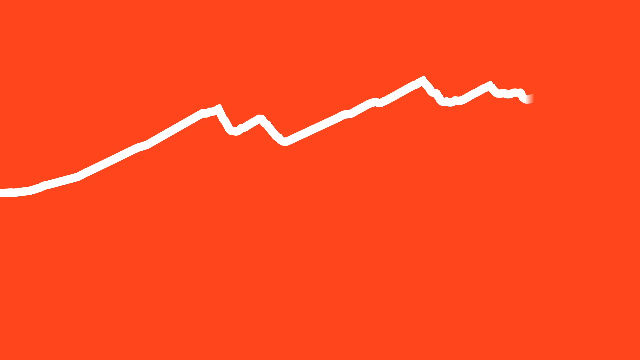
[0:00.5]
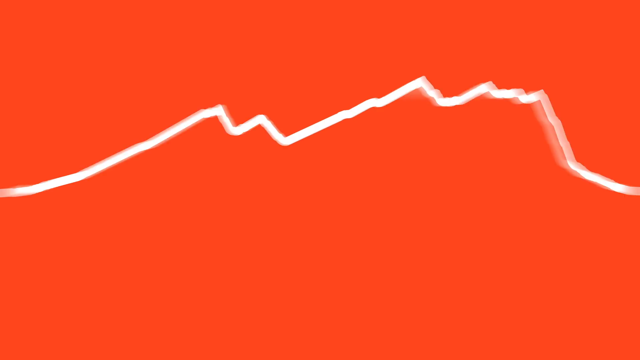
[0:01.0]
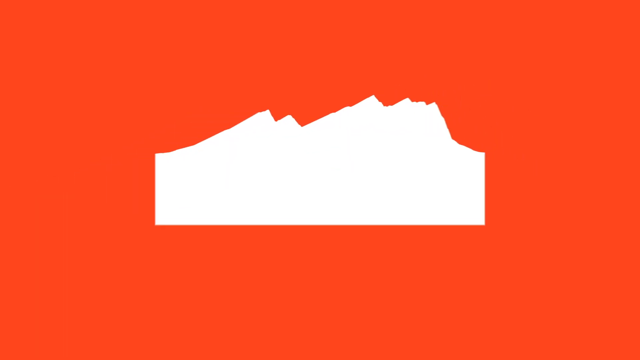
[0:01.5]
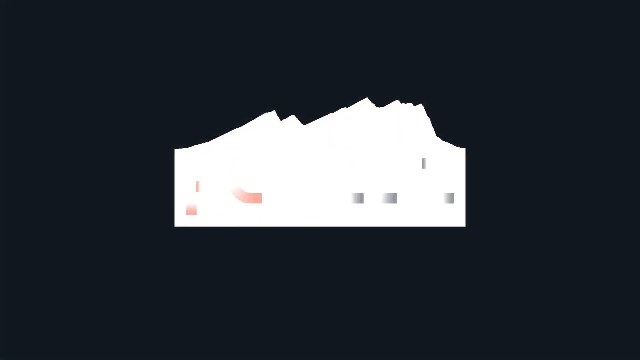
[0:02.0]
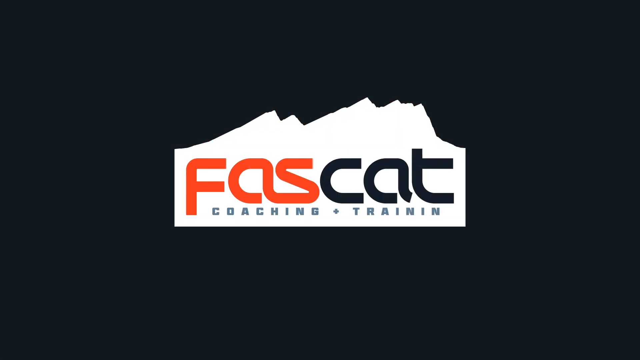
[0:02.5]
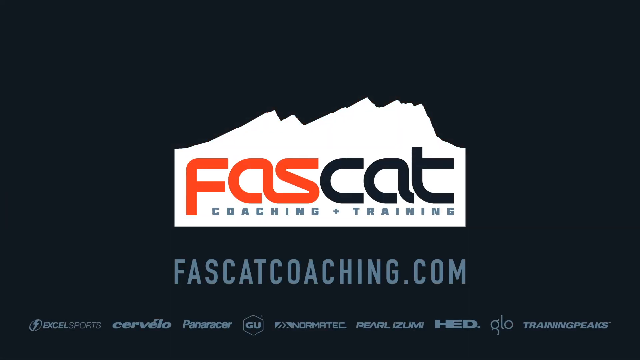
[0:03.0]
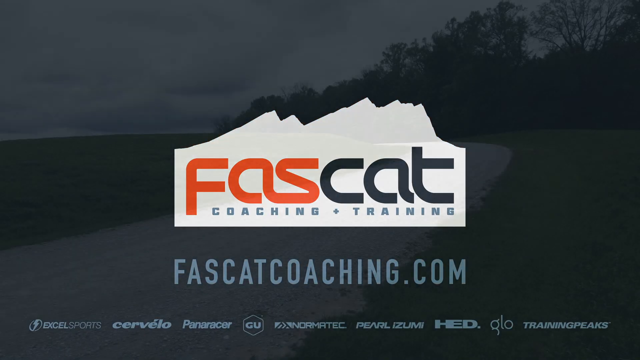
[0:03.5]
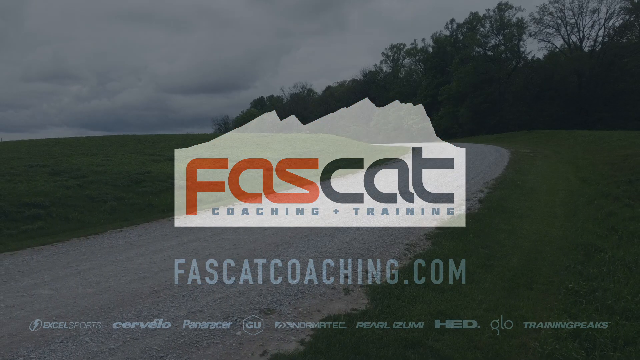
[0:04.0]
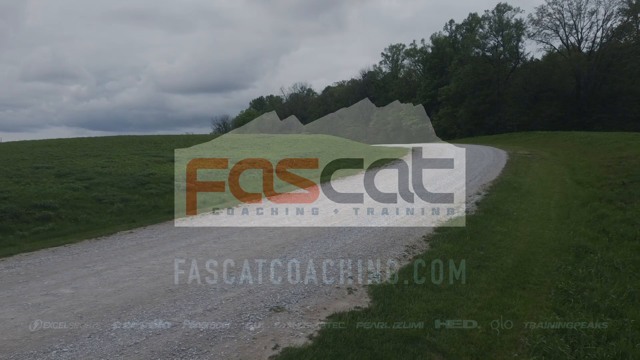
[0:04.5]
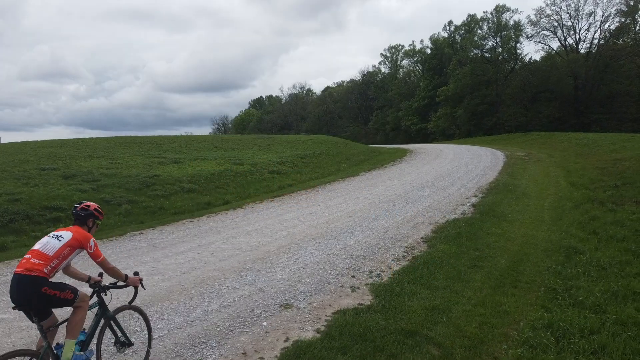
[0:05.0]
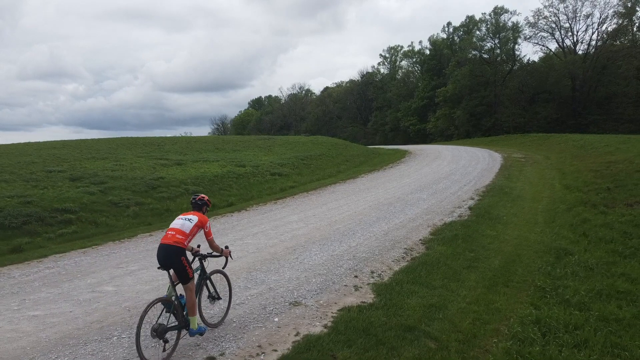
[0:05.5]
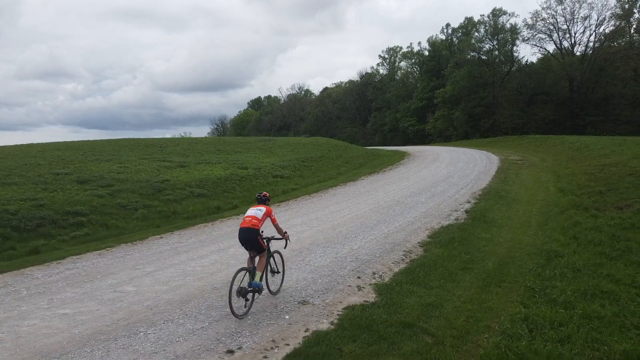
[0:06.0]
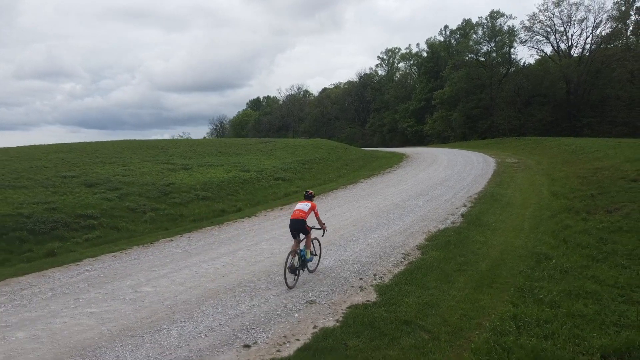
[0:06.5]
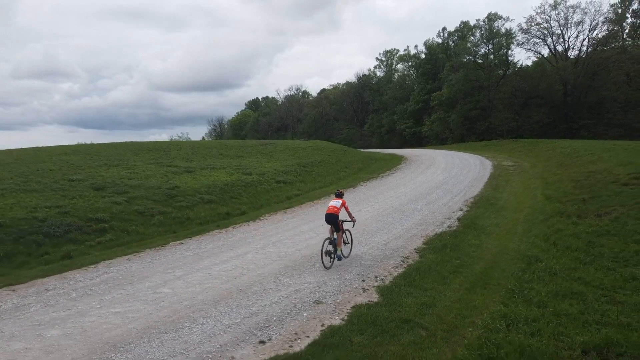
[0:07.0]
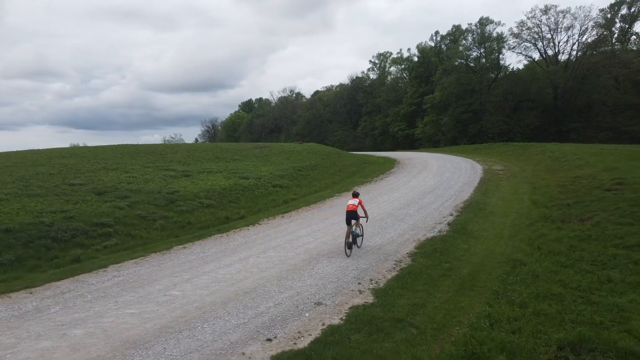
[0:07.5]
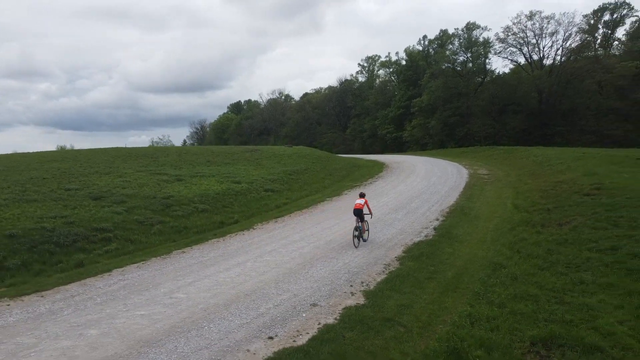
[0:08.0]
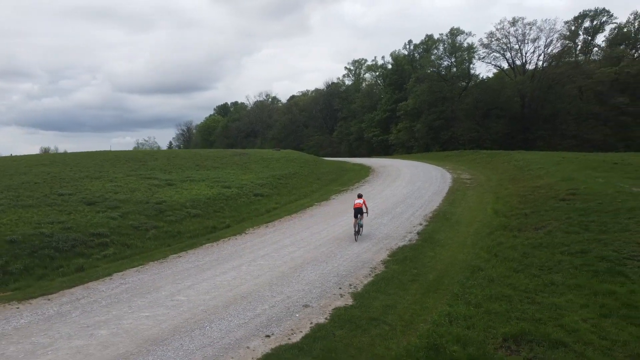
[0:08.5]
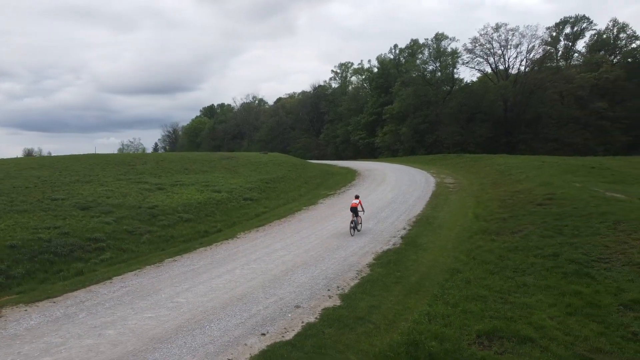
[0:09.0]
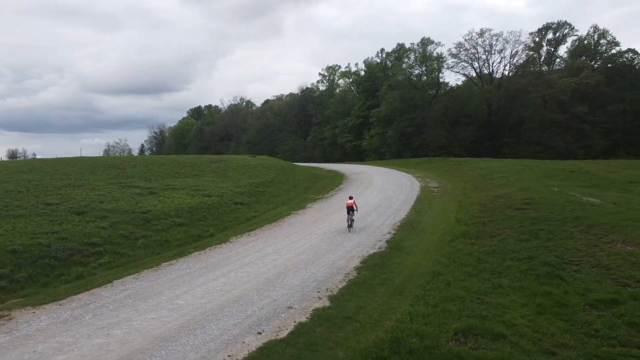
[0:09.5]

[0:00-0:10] The video begins with a red background coming in from the left and going across to the right. A white line, kind of like a rocky-looking mountaintop, goes toward the center. The background changes to black, still with the rocky peak at the top; the shape comes down the sides about an inch and goes across the bottom about four inches. In the center, "FAS" appears in red followed by "CAT" in black. Below that, "coaching and training" is written in black, and below that "fascatcoaching.com", with sponsors across the bottom. The scene then moves outside. A gravel road comes in from the bottom left, goes up to about the center and veers back to the left, with grass to the left and right, trees in the distance and a cloudy sky. A man comes in from the bottom riding a bicycle, going up and to the right along the road. He wears black shorts, a red shirt and a black helmet. As he rides, the camera pans out and up slowly, and he gets smaller in the distance.